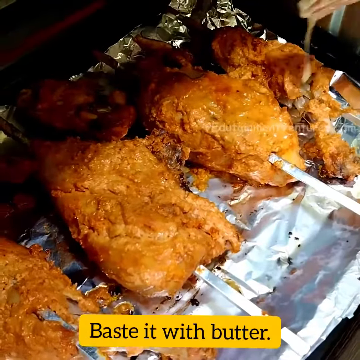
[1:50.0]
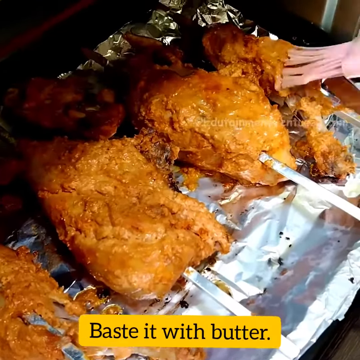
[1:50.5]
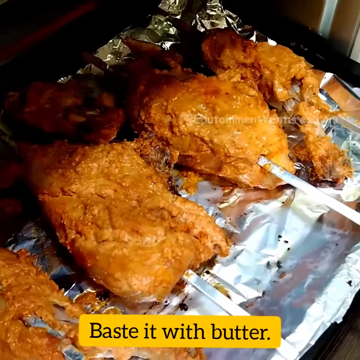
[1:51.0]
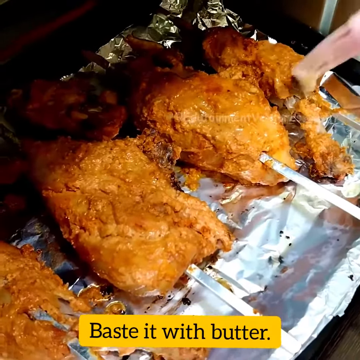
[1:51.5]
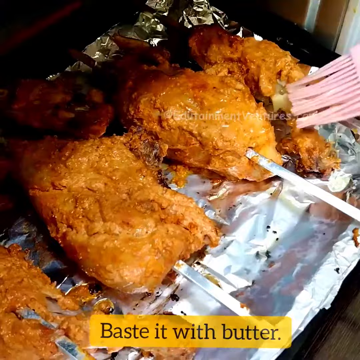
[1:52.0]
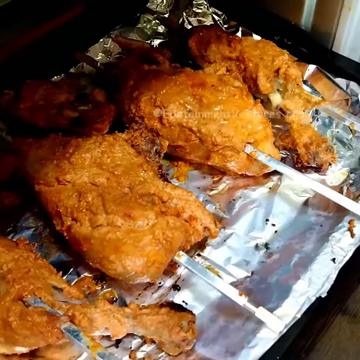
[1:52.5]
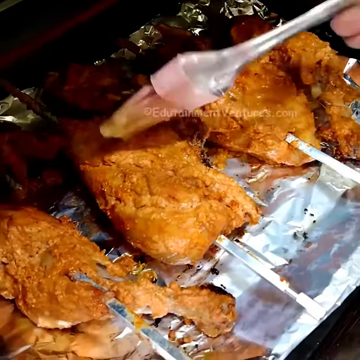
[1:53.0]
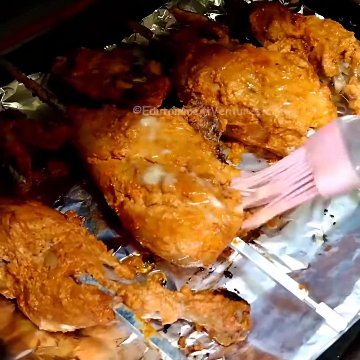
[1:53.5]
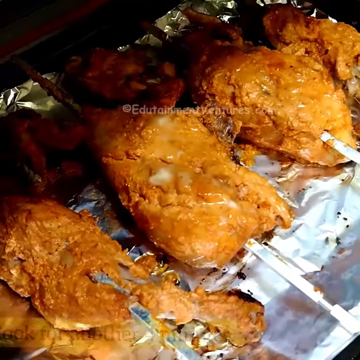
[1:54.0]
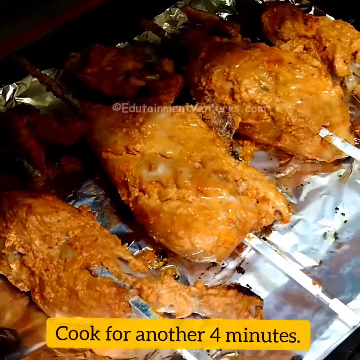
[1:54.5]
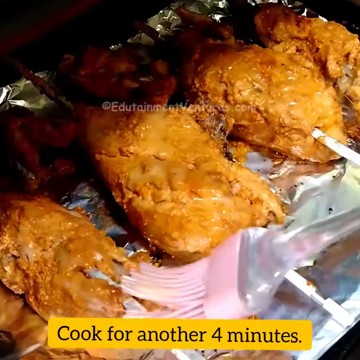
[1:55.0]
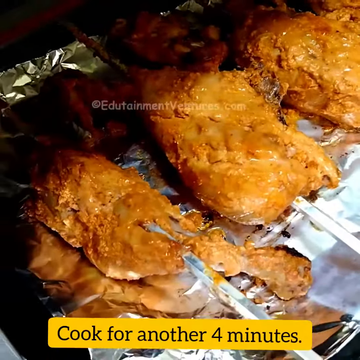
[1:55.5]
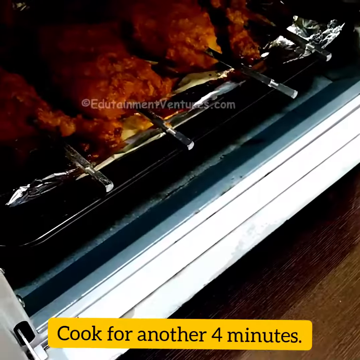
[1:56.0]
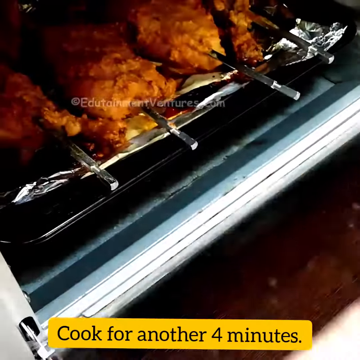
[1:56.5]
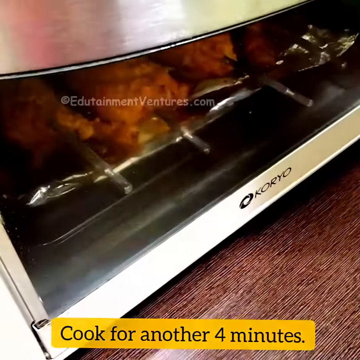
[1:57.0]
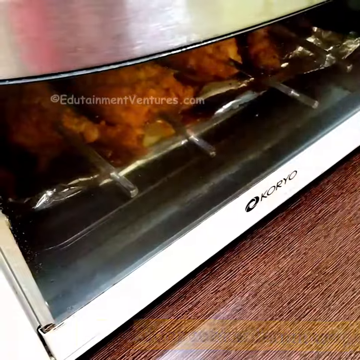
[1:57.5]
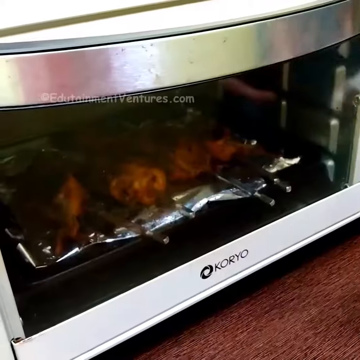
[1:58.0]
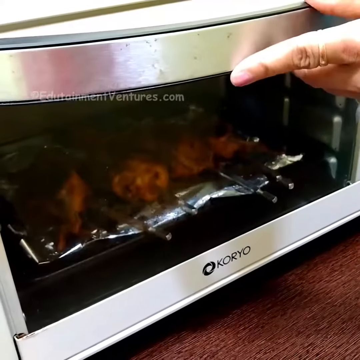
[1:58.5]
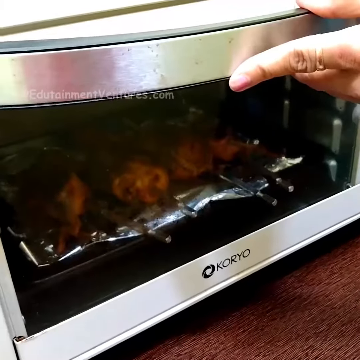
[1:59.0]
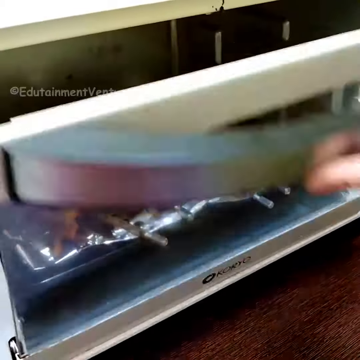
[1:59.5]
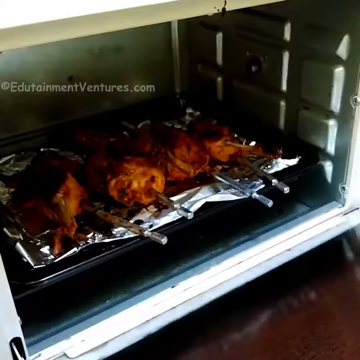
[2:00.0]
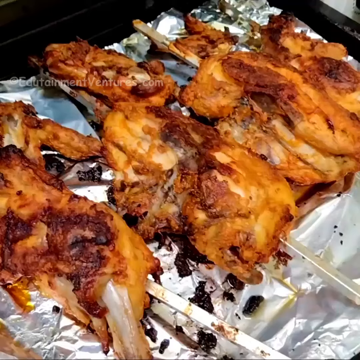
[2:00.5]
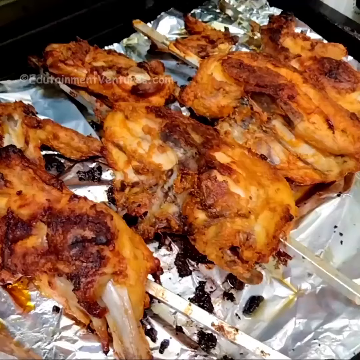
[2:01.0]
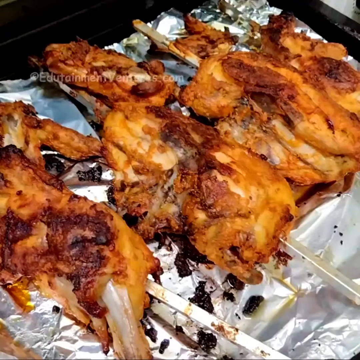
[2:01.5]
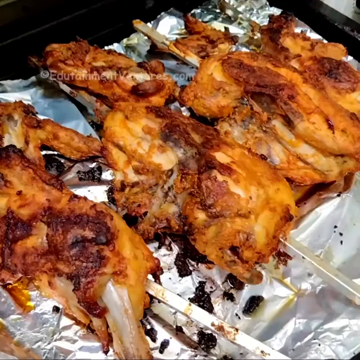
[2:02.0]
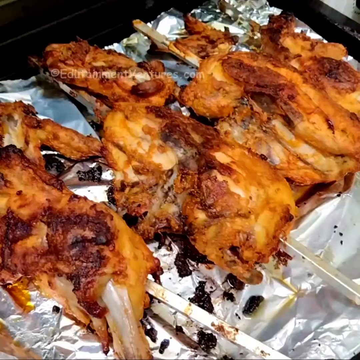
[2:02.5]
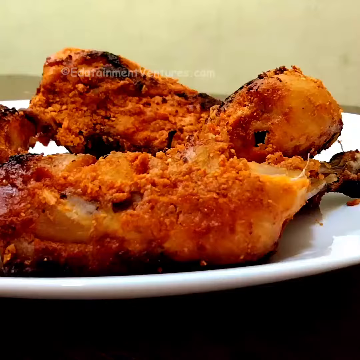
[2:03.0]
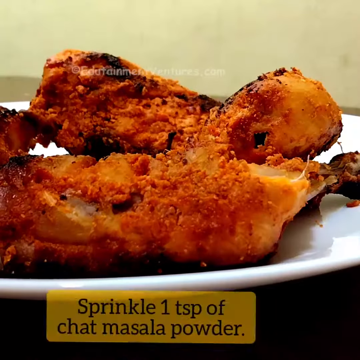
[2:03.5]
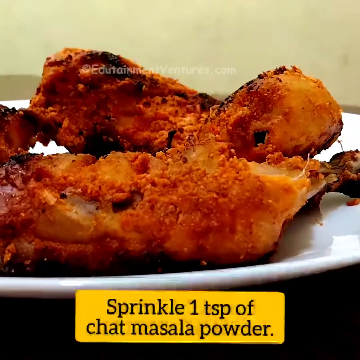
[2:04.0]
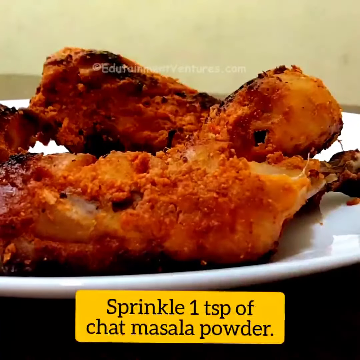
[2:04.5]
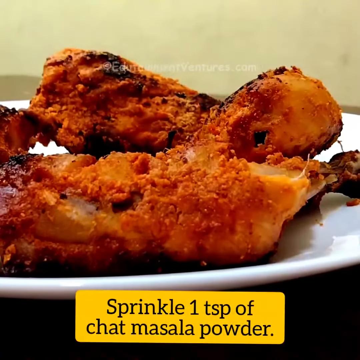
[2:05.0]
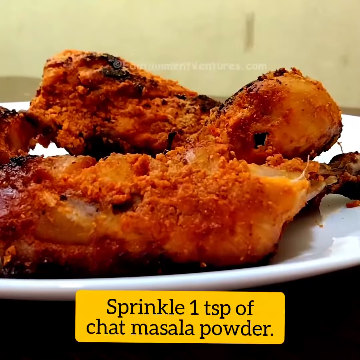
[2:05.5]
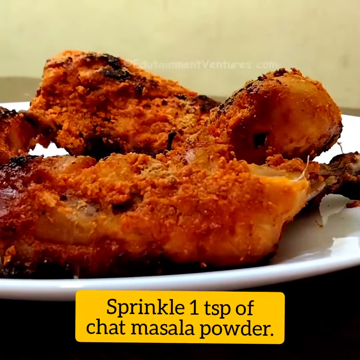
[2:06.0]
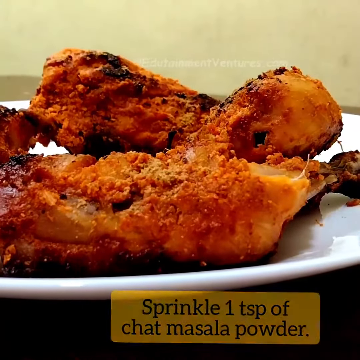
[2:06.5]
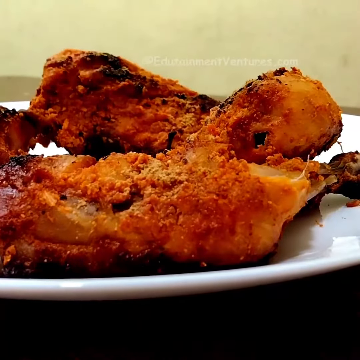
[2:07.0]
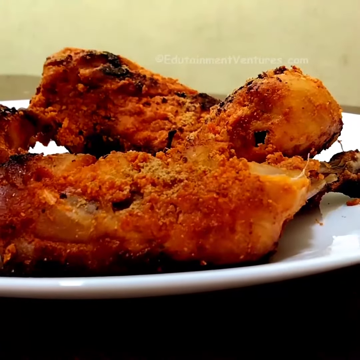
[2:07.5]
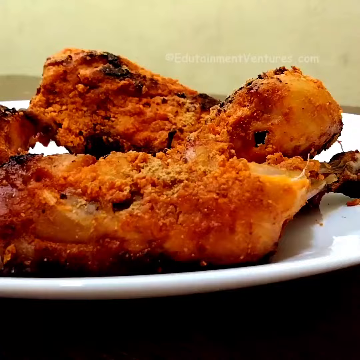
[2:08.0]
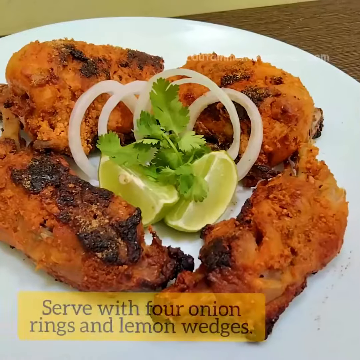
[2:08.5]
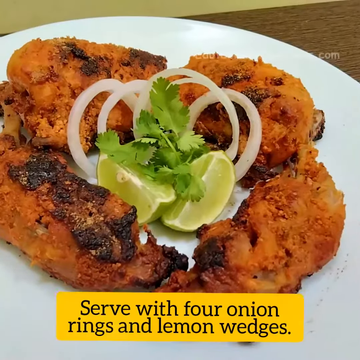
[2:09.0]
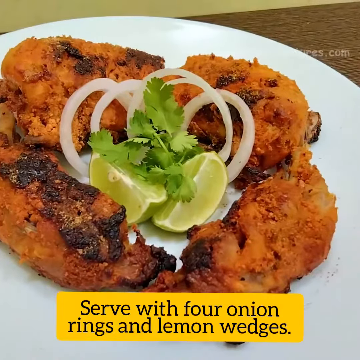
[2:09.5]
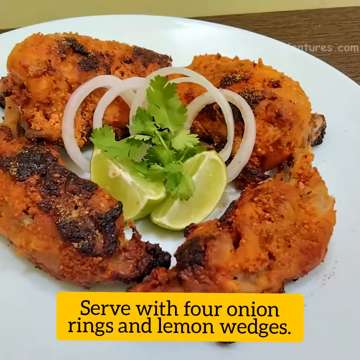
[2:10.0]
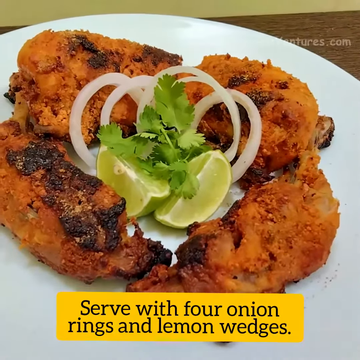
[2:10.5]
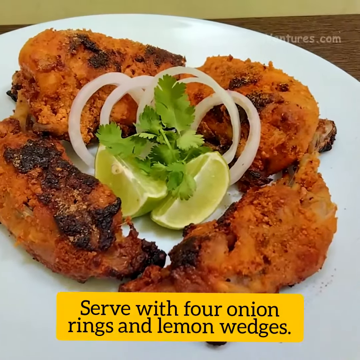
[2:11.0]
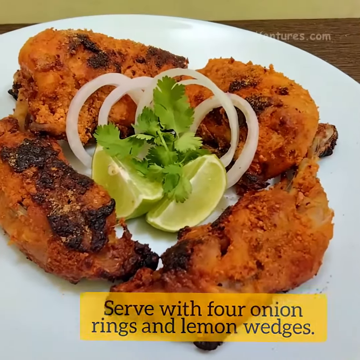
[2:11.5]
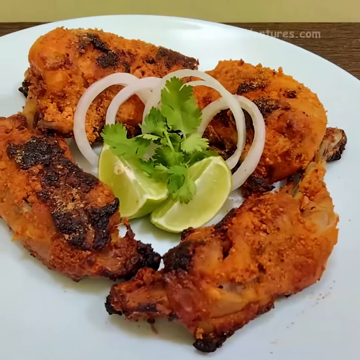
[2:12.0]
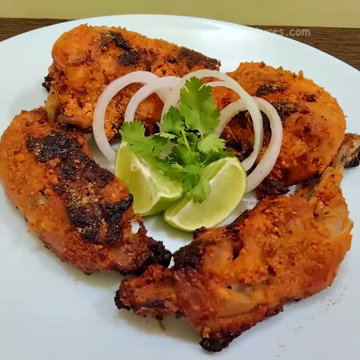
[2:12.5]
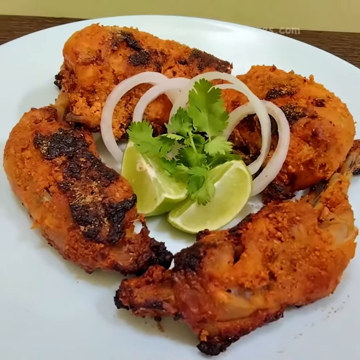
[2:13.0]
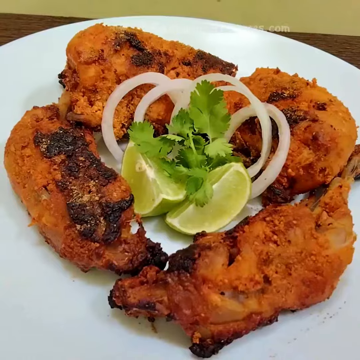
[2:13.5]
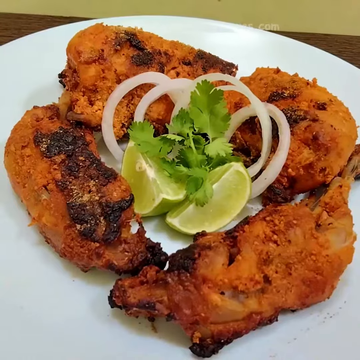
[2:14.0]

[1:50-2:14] Text at the bottom reads "baste it with butter", and the person bastes the chicken pieces with what is apparently butter. The chicken is still on the skewers on the aluminium foil-lined tray. In the next scene it is still cooking, with oil bubbling on the tray. It is put back into the oven with text at the bottom reading "cook for another four minutes", and the person then opens the front door of the oven. A still picture follows of what is apparently the completed, cooked chicken, still on the skewers and the aluminium tray, now with brown burn or seared marks. The chicken is a yellow colour with slightly brown parts where it is cooked more thoroughly, and there are burn marks on the tray as well. Text at the bottom then reads "sprinkle one teaspoon of chat masala powder", and someone sprinkles something on top of the cooked chicken, which is now on a plate rather than the foil-lined tray. In the final scene, text at the bottom reads "serve with four onion rings and lemon wedges", and four pieces of chicken are displayed in a circle on the plate with what appear to be two lemon wedges and some coriander in the middle of the circle.